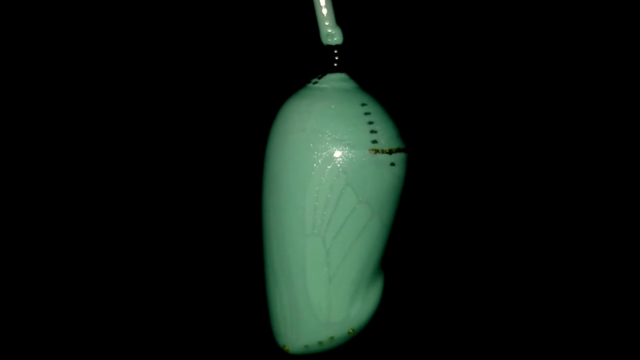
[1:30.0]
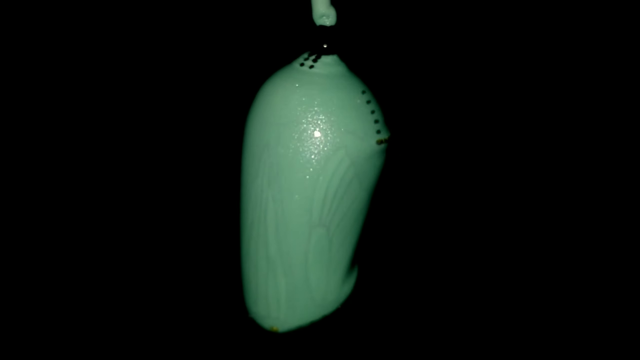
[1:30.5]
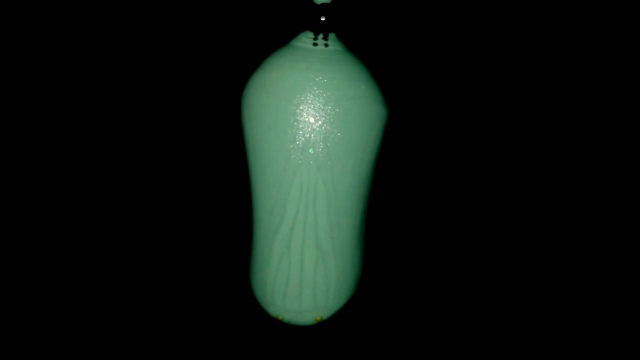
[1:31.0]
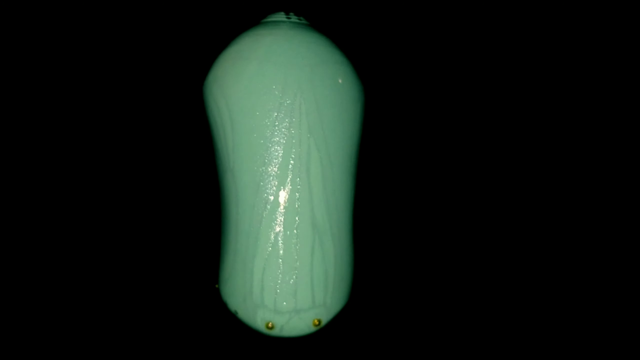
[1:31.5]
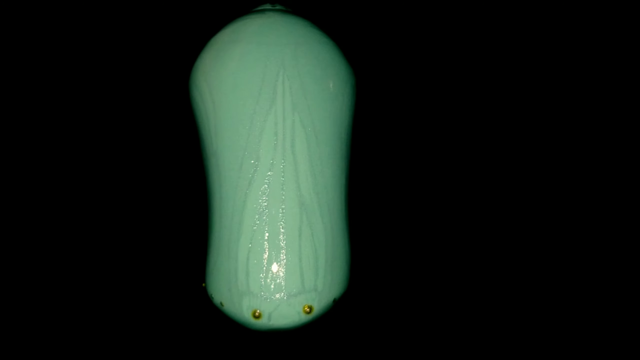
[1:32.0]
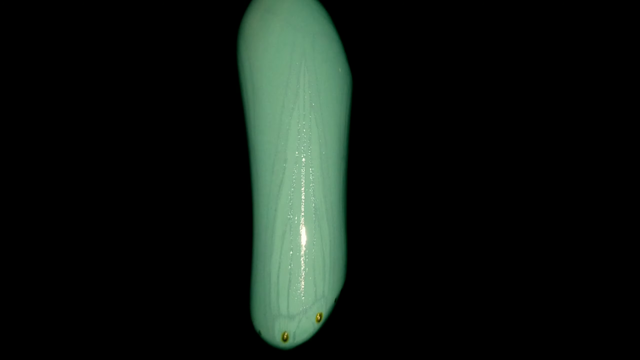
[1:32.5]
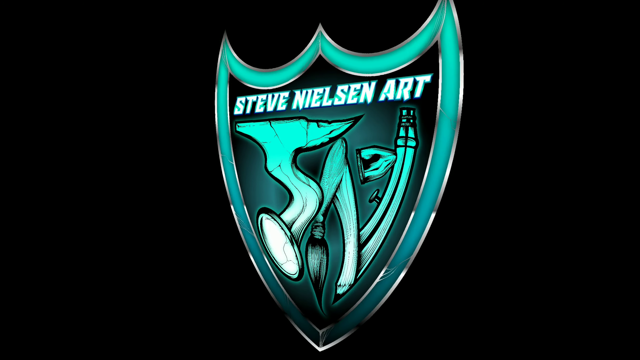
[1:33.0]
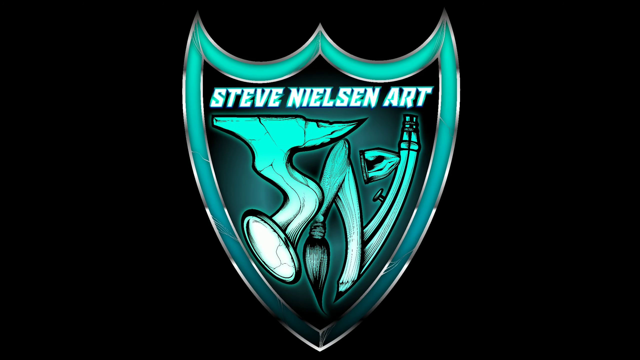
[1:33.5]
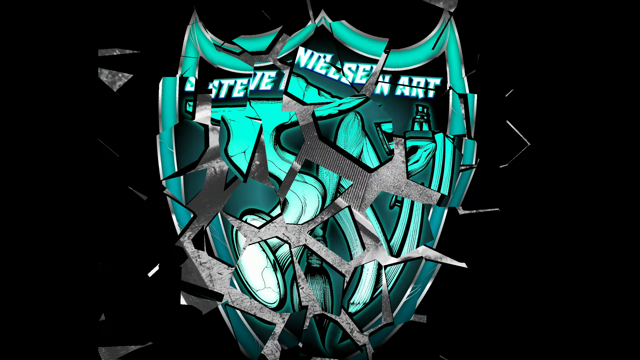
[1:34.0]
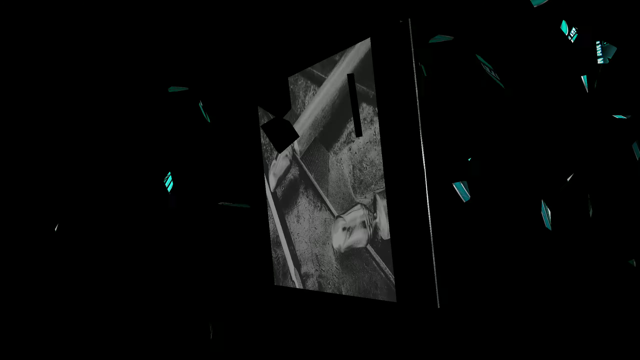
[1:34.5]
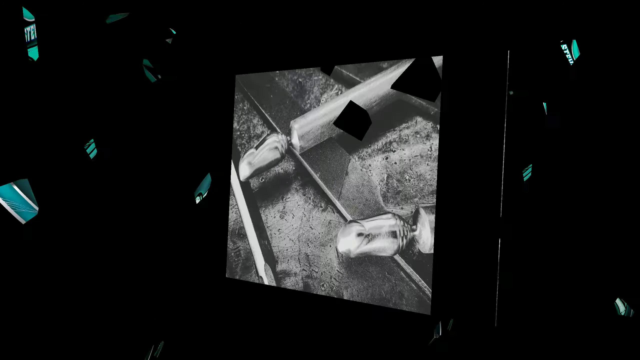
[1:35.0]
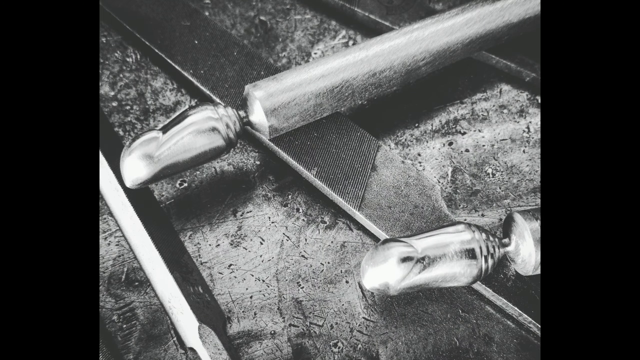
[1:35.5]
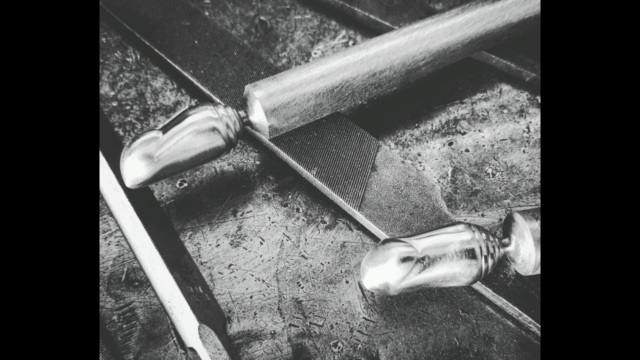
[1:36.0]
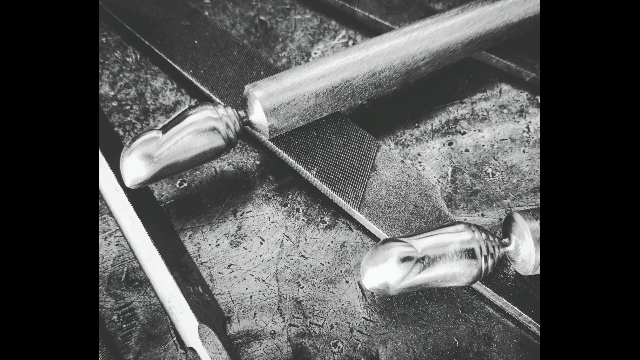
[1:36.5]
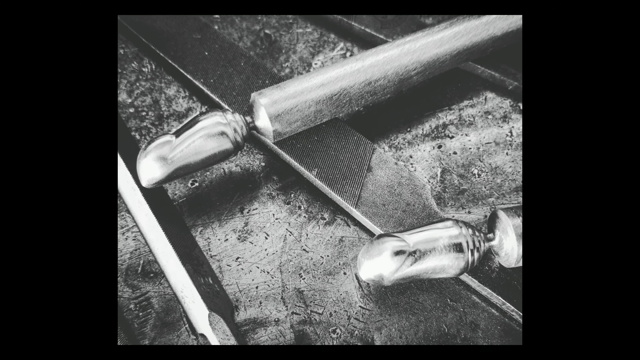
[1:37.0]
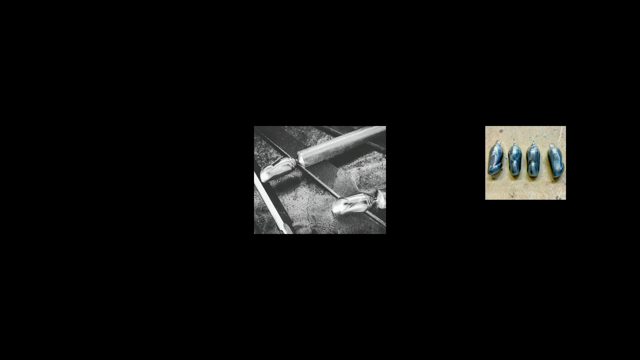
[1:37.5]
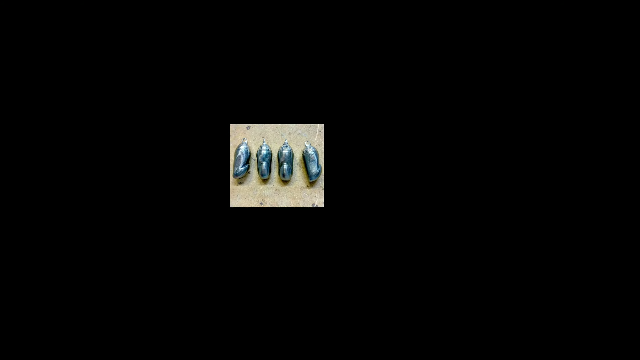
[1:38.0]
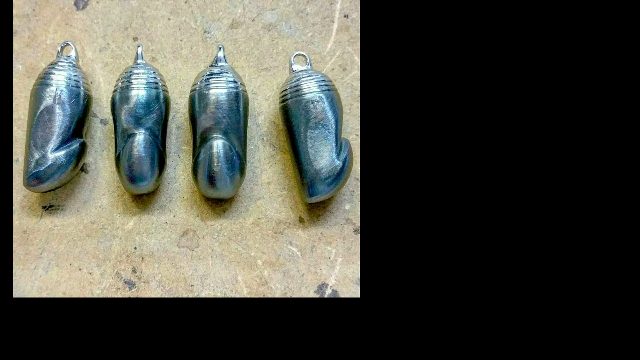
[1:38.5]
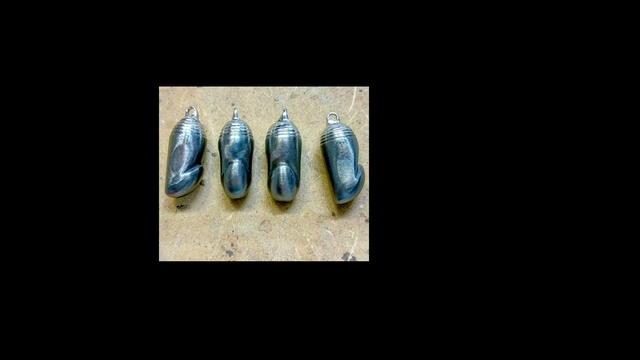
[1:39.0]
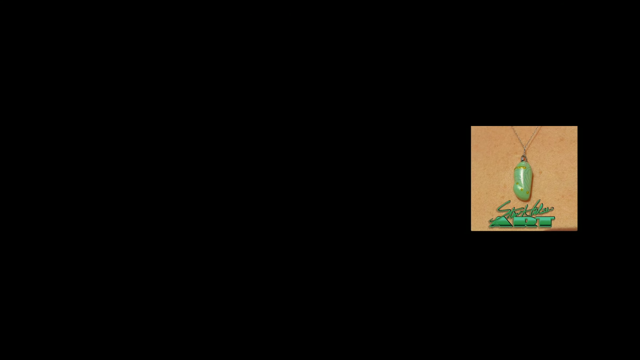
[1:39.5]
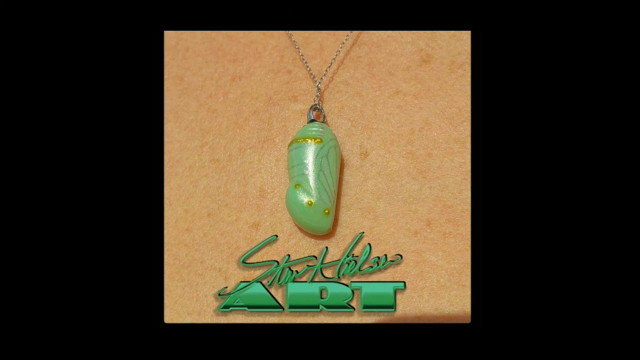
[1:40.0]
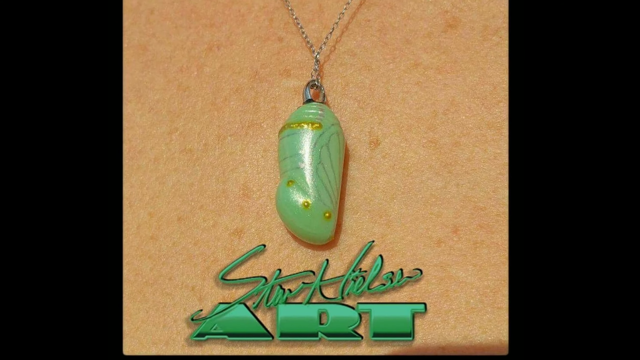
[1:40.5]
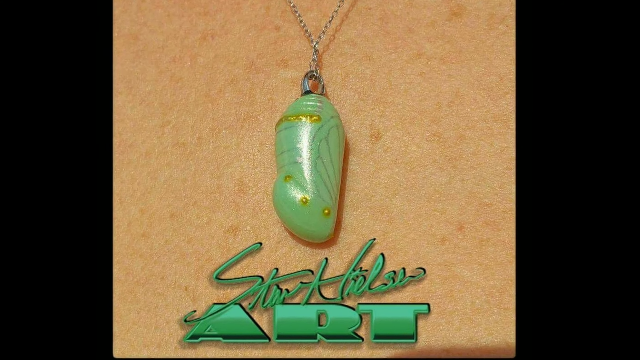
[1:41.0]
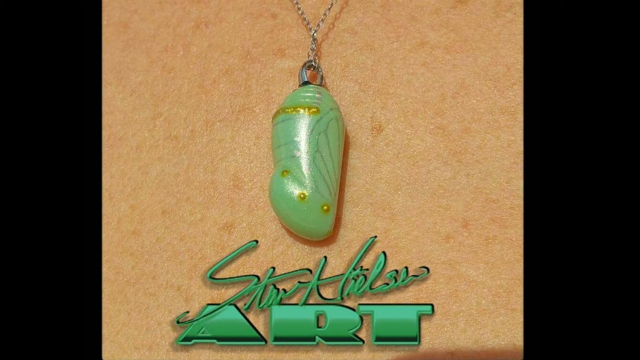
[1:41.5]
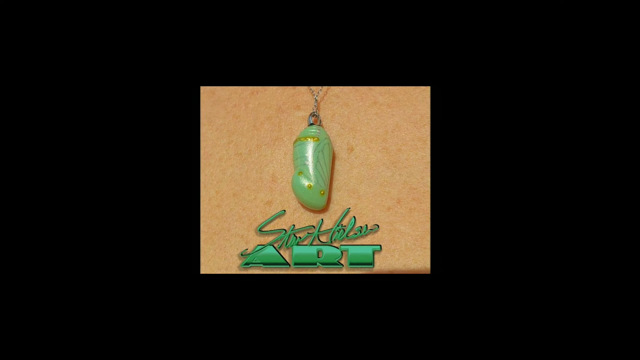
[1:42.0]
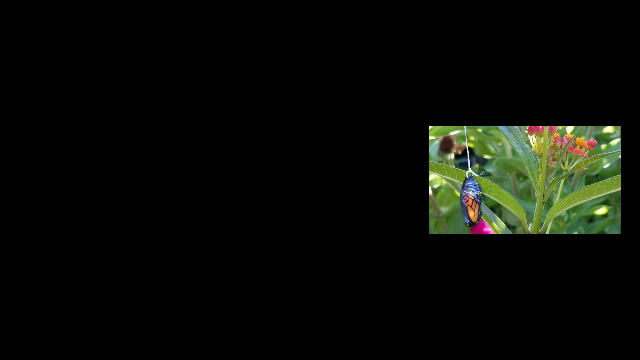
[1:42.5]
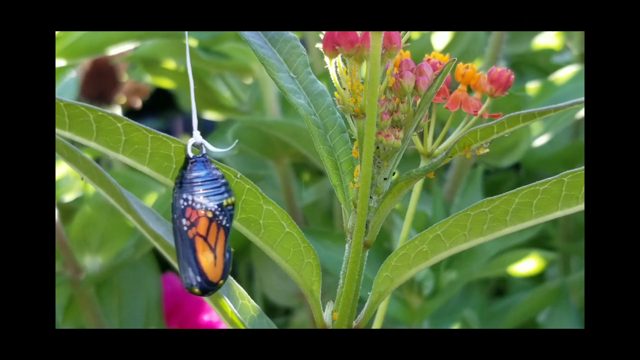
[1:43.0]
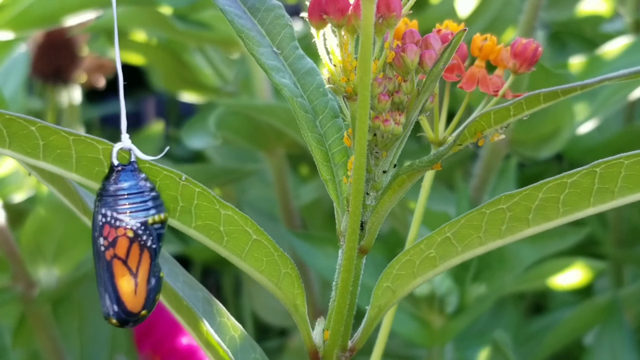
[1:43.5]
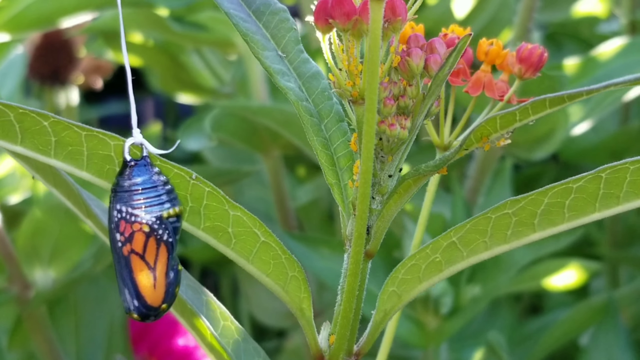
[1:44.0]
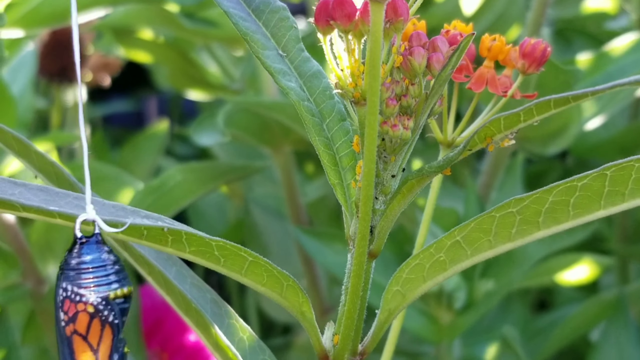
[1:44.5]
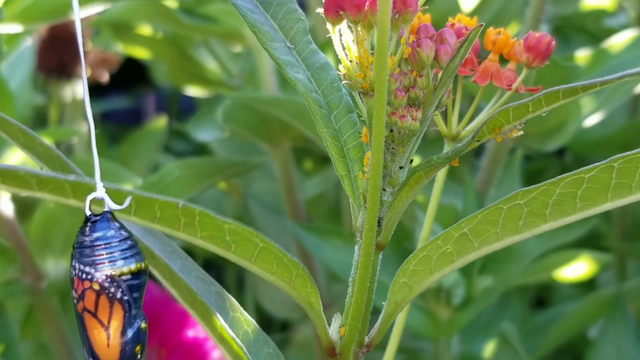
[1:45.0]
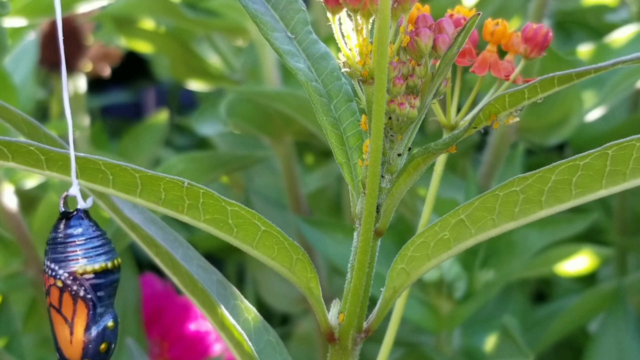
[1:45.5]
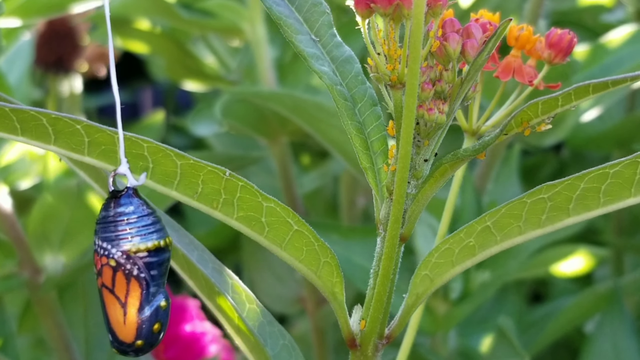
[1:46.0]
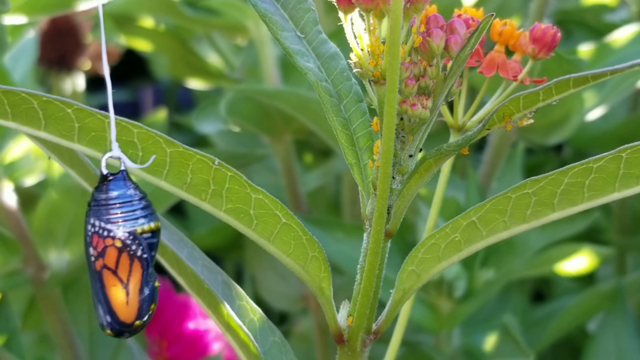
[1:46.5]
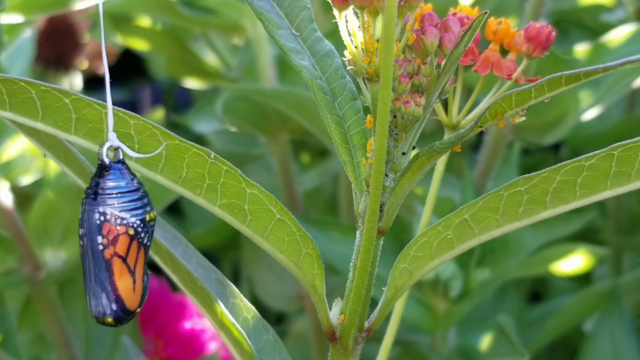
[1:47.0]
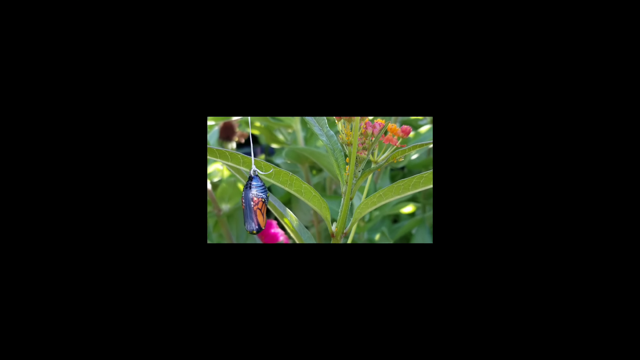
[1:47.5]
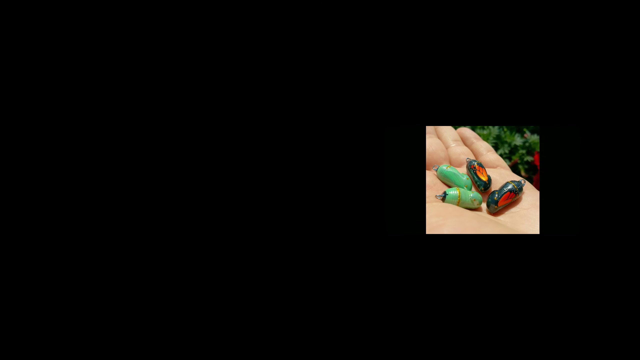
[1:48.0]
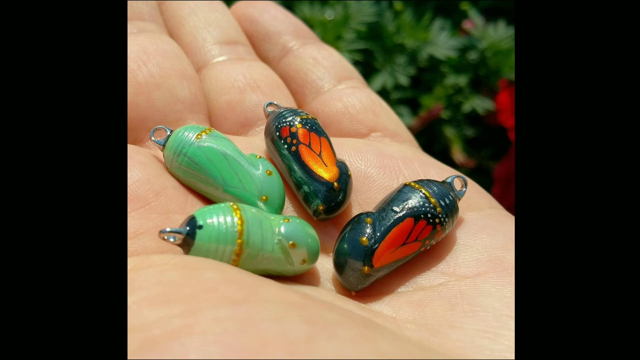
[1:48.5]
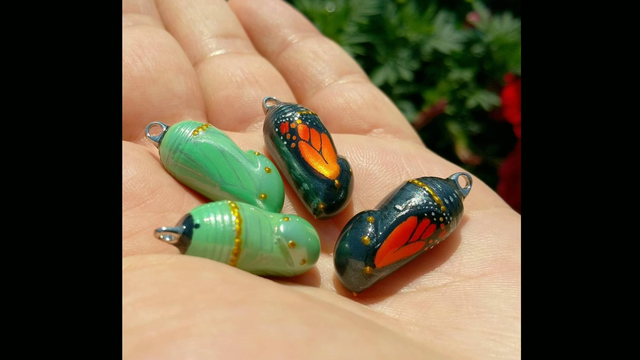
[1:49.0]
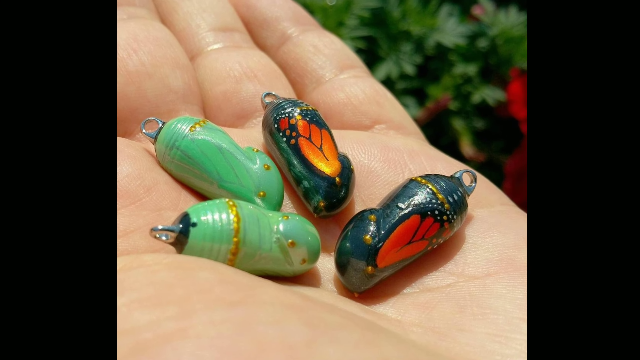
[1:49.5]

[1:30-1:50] The cocoon appears with what looks like white glittery paint added, small gold dots at the very bottom, and line details painted onto it. It turns almost flat and then flips over, revealing the shield logo for Steve Nielsen Art, this time in blue. The logo, a piece of clip art, shatters and goes away, and an image flips quickly from left to right. The image is zoomed in on, showing a black-and-white picture of what looks like small metal cocoons on the end of one or two steel rods, one closer to the bottom right corner and one toward the upper left corner, with files sitting under the cocoons. The image zooms out and a new image comes in from the right, bumping the original out through the left side. This new image, of what looks like a cocoon, stops in the middle, zooms in, then quickly zooms out as another image comes in from the right and bumps it out of the way. This image shows what looks like a green or jade cocoon on a necklace, apparently a jewelry piece.